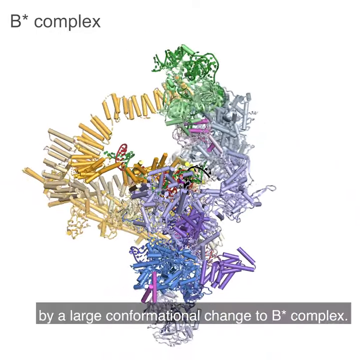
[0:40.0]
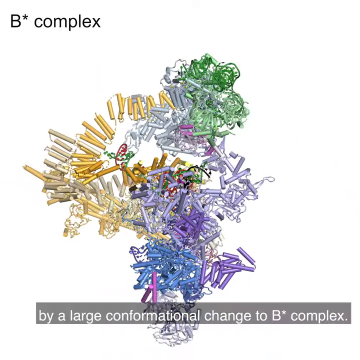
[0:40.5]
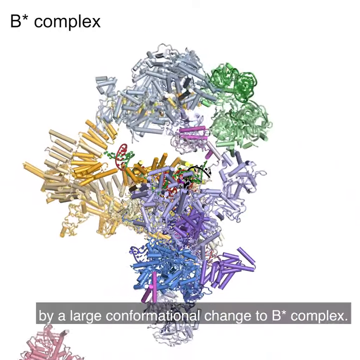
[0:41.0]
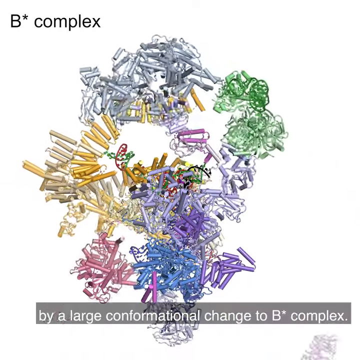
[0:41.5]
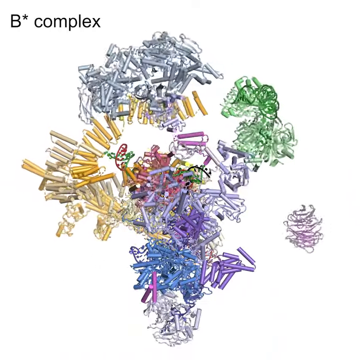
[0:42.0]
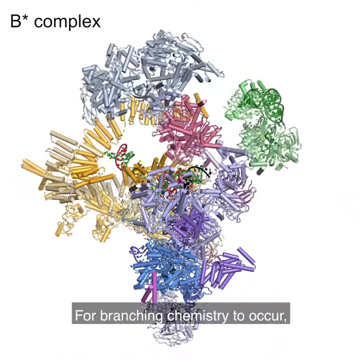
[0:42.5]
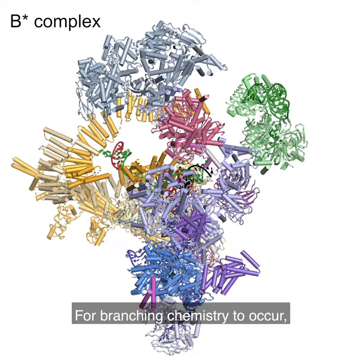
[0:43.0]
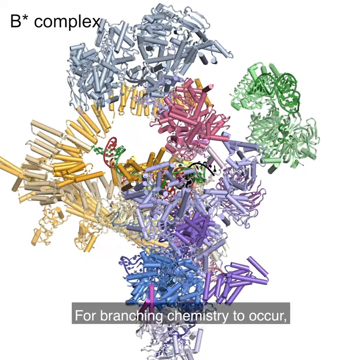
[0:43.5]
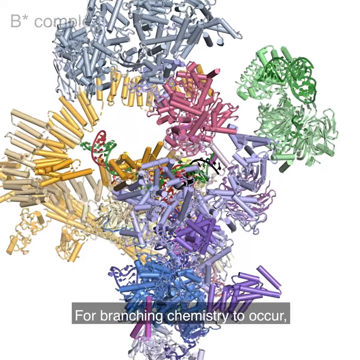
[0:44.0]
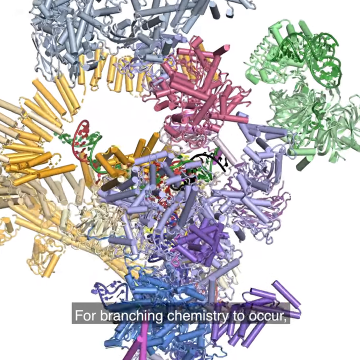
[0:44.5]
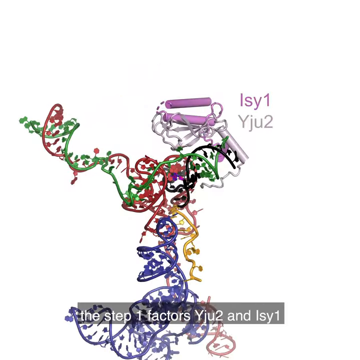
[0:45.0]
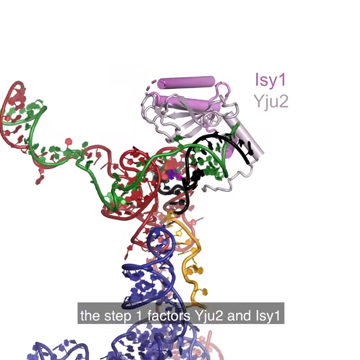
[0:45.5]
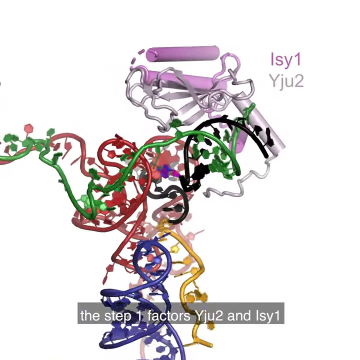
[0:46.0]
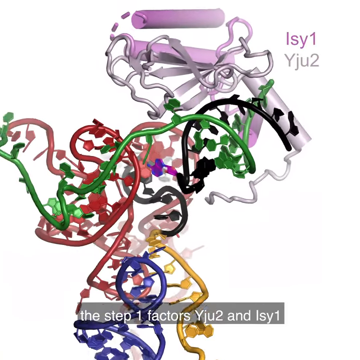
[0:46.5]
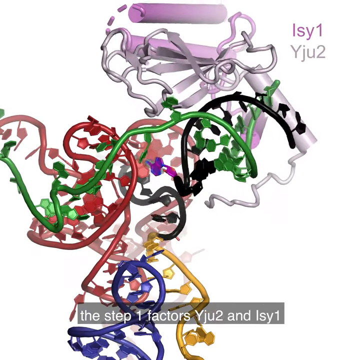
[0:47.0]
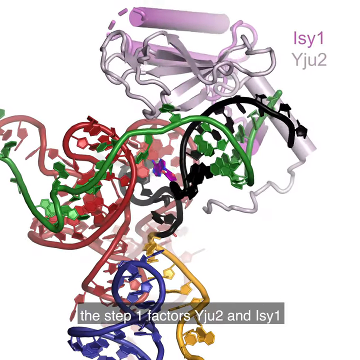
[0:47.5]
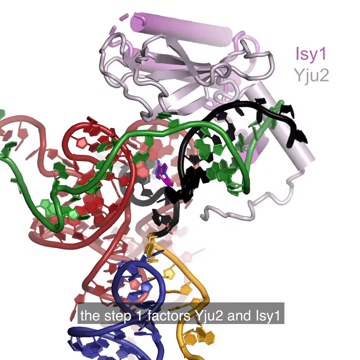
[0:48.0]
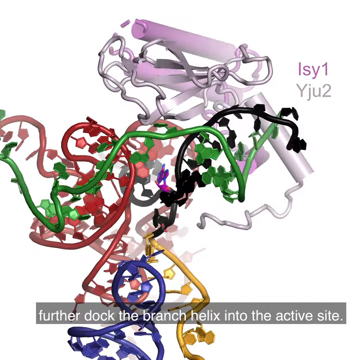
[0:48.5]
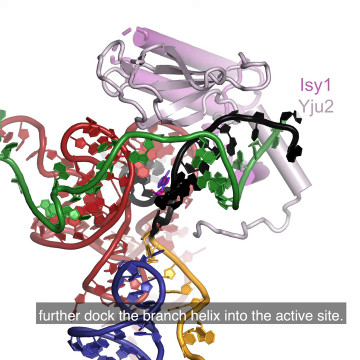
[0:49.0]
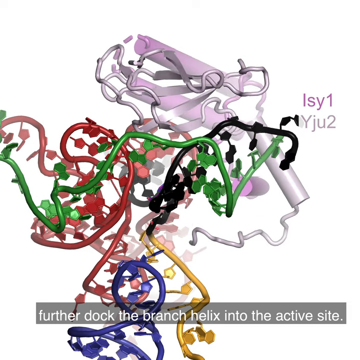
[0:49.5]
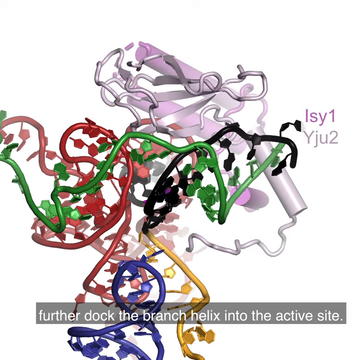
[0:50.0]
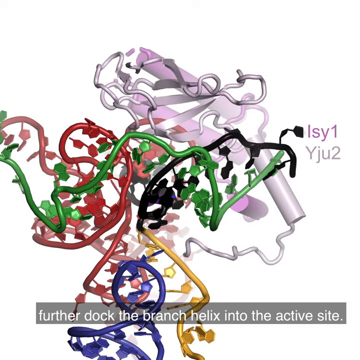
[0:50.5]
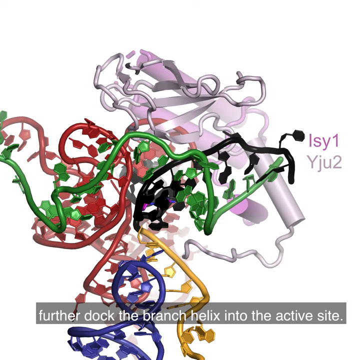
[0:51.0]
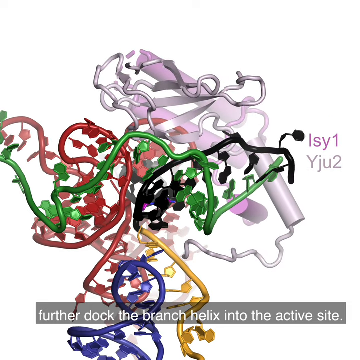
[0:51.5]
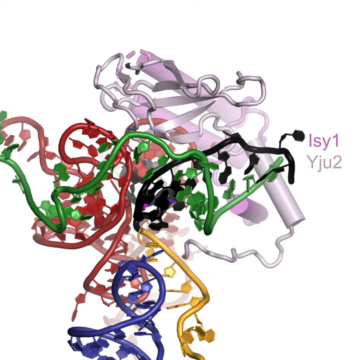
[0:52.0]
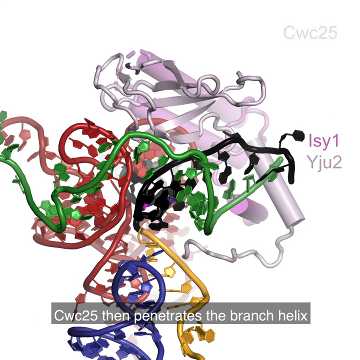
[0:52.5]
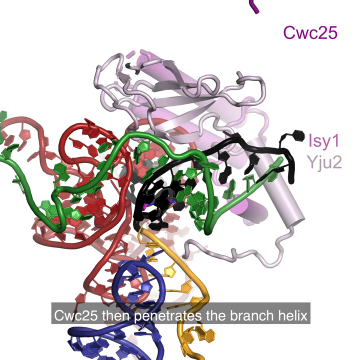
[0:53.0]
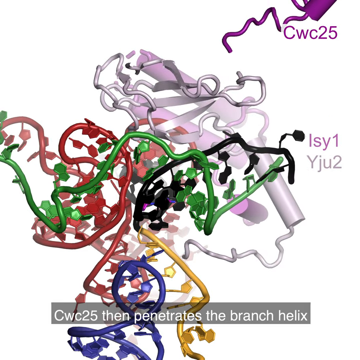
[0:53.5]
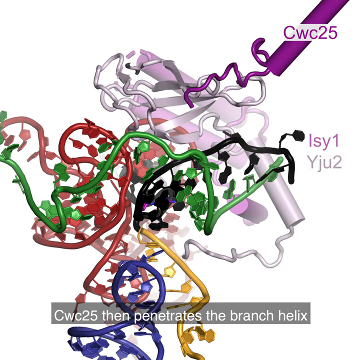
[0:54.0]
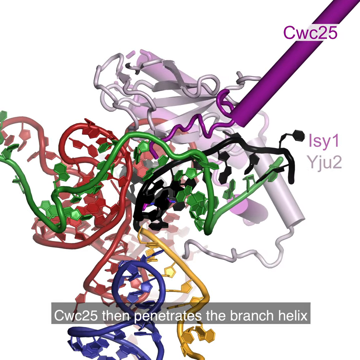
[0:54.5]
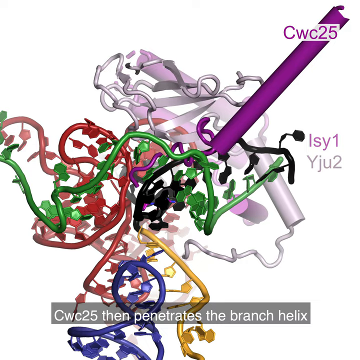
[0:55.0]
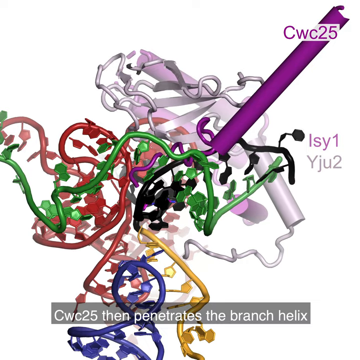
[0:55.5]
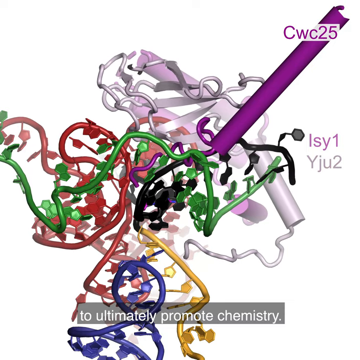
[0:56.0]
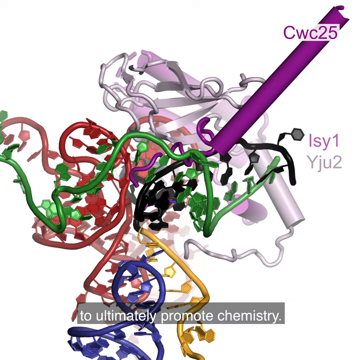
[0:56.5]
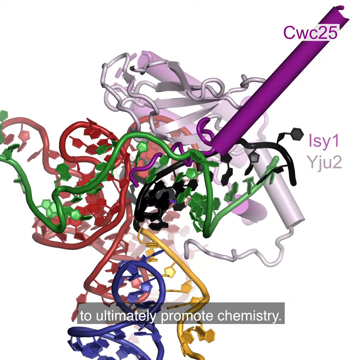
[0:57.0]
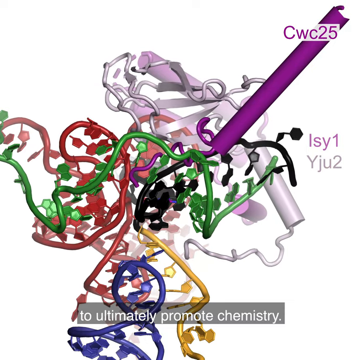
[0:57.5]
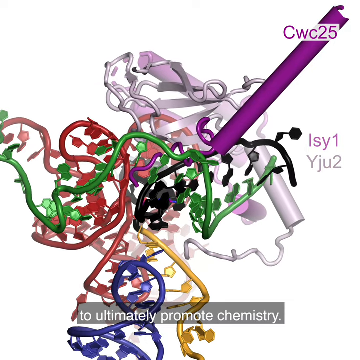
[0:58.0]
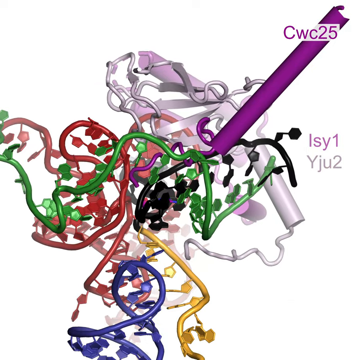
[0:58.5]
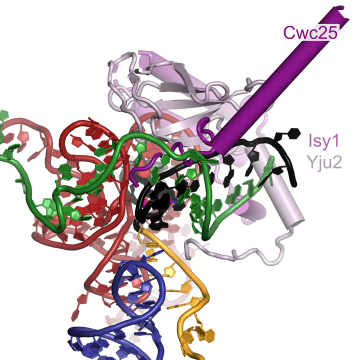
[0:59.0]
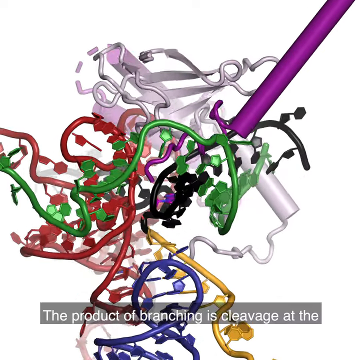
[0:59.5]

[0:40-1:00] An animated illustration shows a complex chemical structure that looks like an organic or biological structure. The structures are grey, green, black and red and look like little tubes or pipes interconnected with tangling strand-like substances. At the bottom of the screen there is an illustration that describes what is going on in the animation. Parts of the biological structure float about and connect with each other. The camera then zooms in for a detailed look at the intricate structure, which looks like tangled DNA strands. The strands appear to be unravelling as they collapse in very slow motion. Next, a purple rod-like structure emerges from the upper right corner of the screen and connects to the rest of the structures; it is labelled "CWC25".